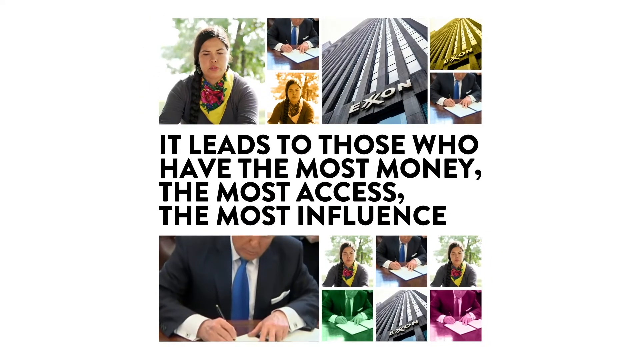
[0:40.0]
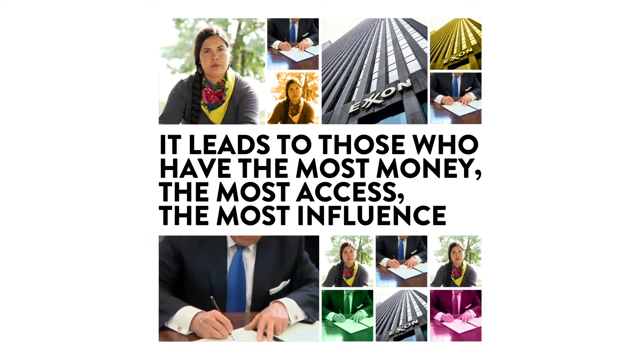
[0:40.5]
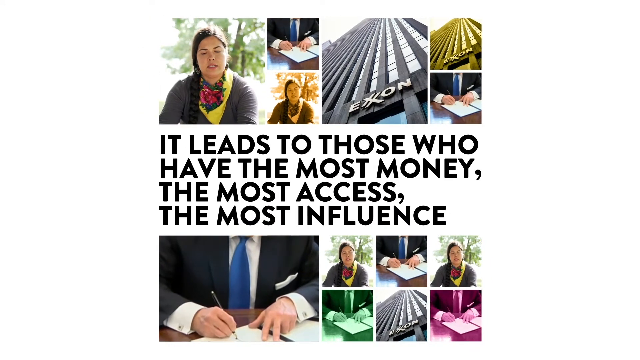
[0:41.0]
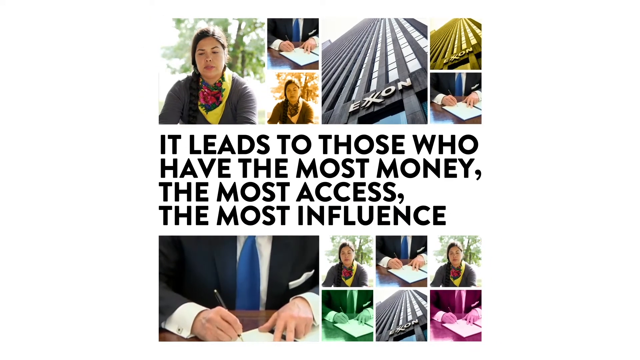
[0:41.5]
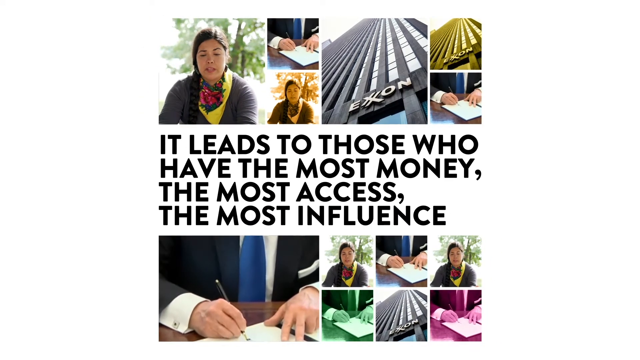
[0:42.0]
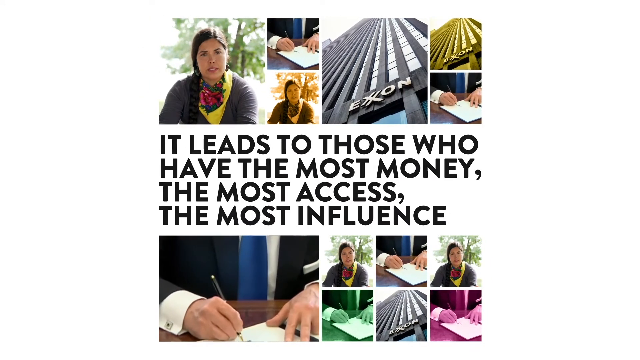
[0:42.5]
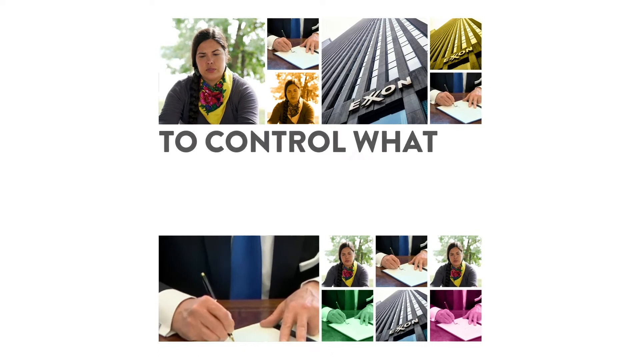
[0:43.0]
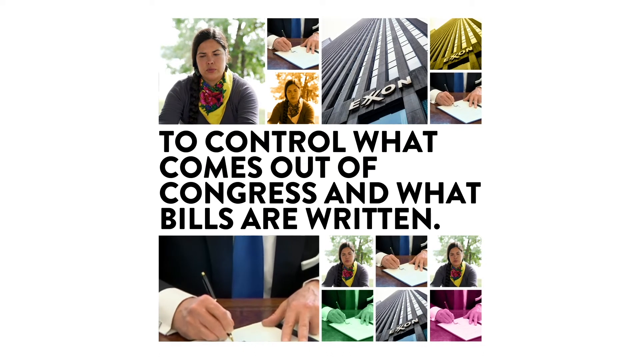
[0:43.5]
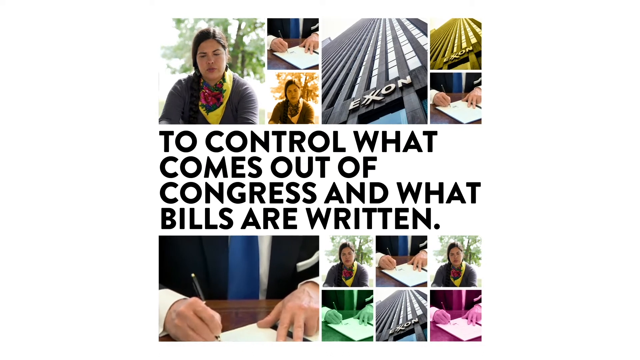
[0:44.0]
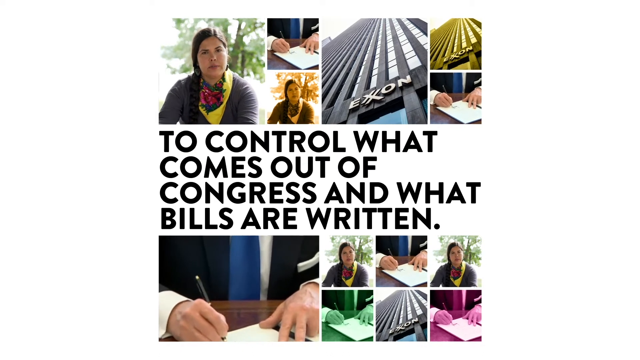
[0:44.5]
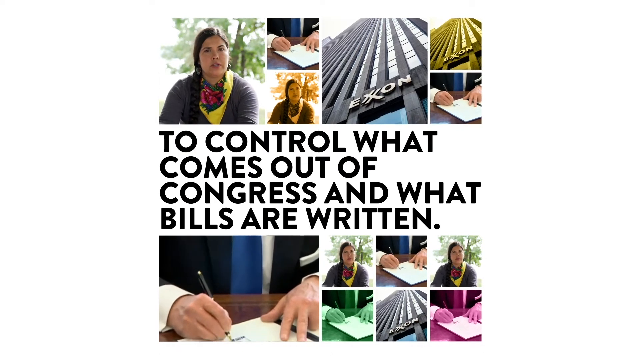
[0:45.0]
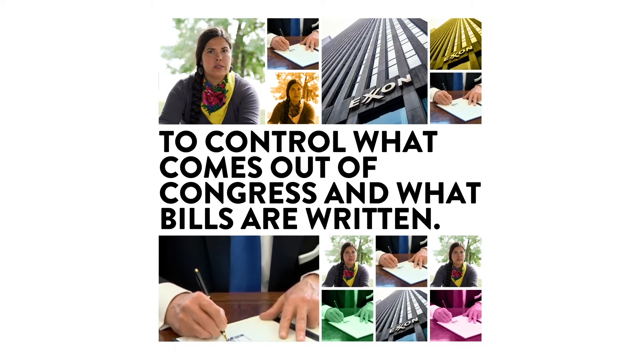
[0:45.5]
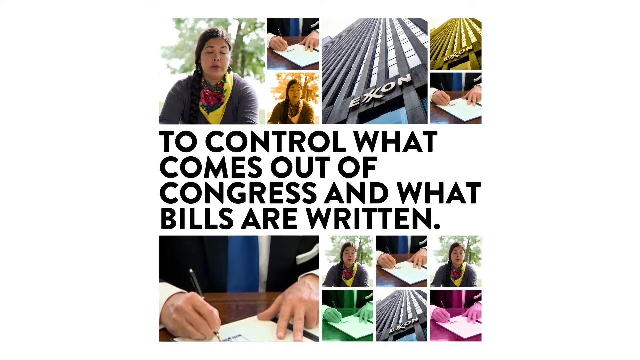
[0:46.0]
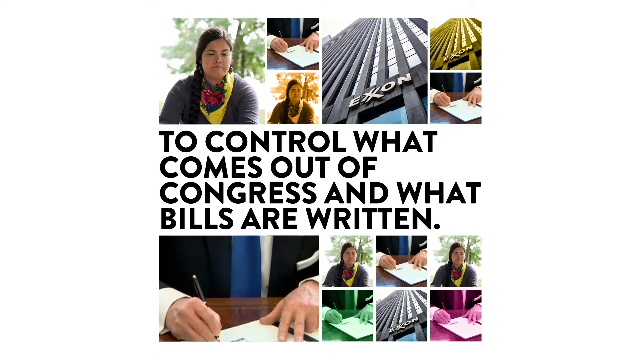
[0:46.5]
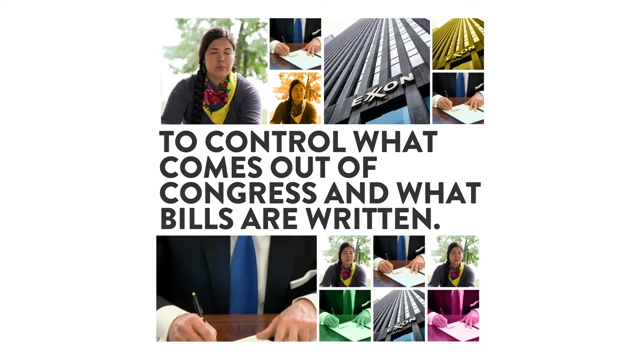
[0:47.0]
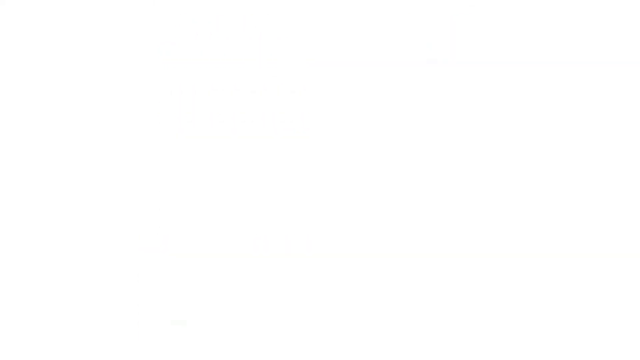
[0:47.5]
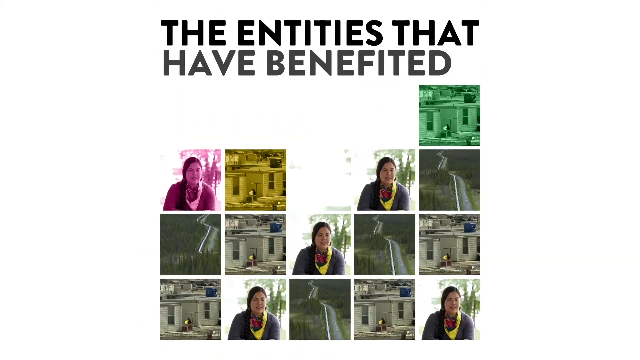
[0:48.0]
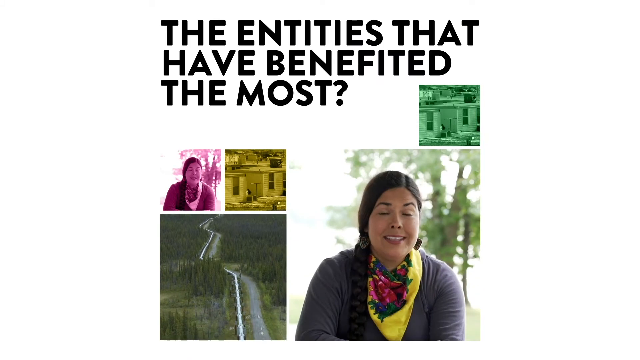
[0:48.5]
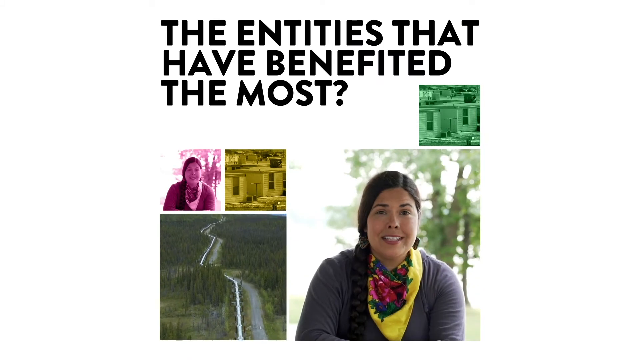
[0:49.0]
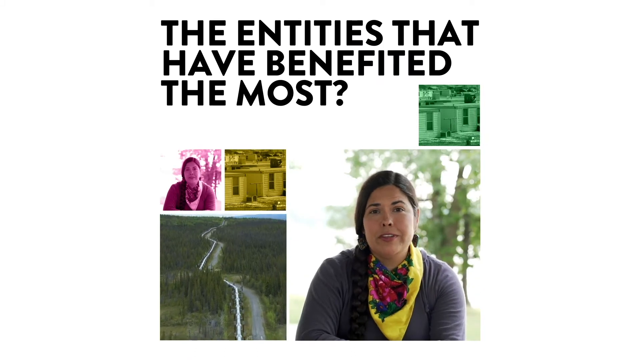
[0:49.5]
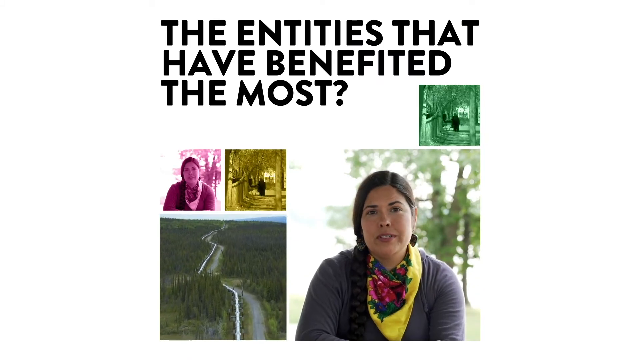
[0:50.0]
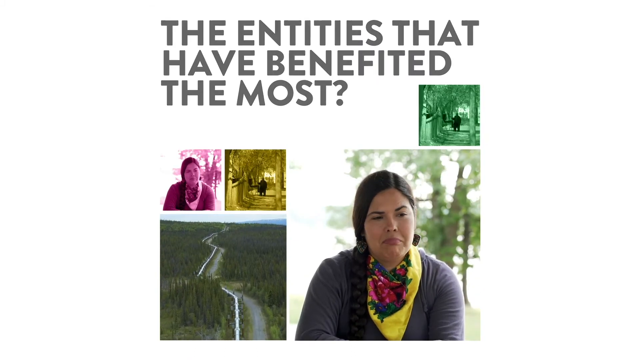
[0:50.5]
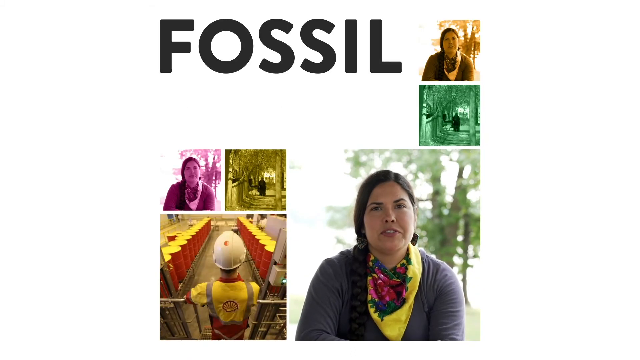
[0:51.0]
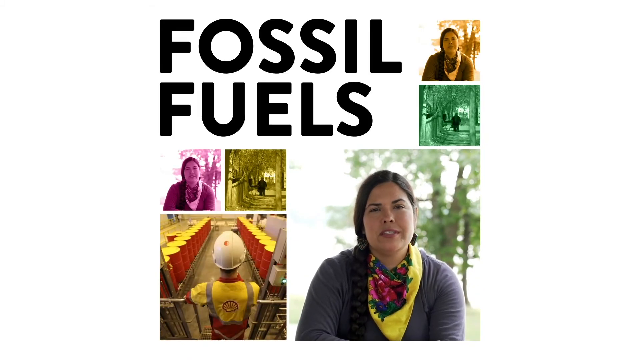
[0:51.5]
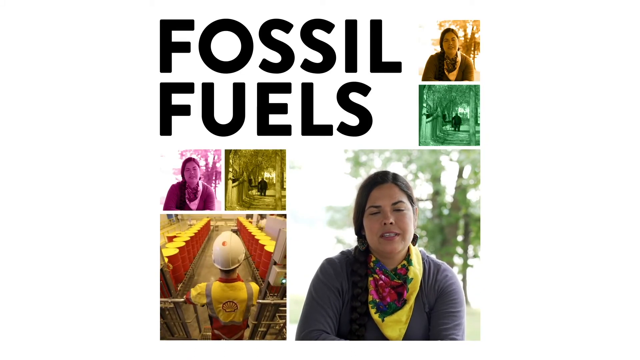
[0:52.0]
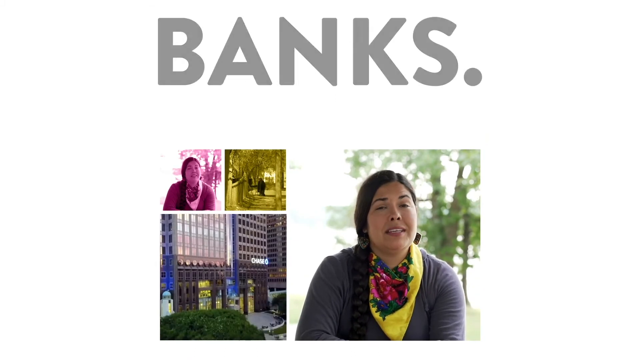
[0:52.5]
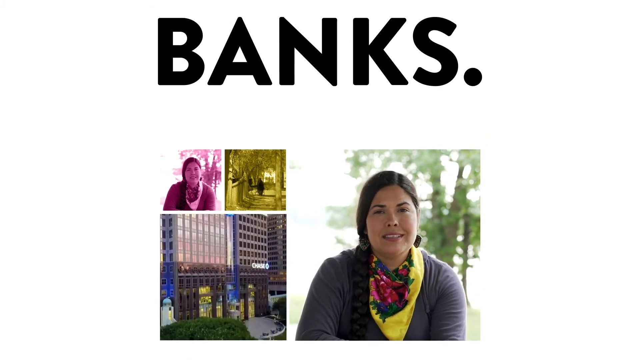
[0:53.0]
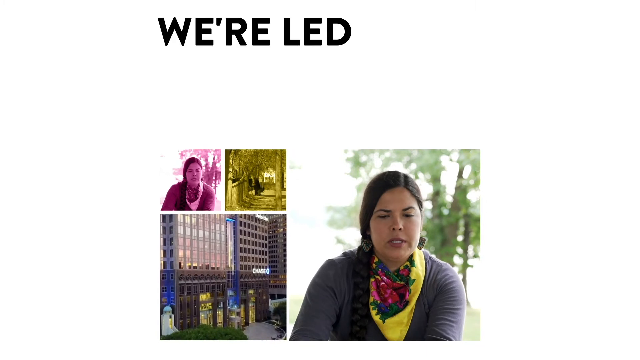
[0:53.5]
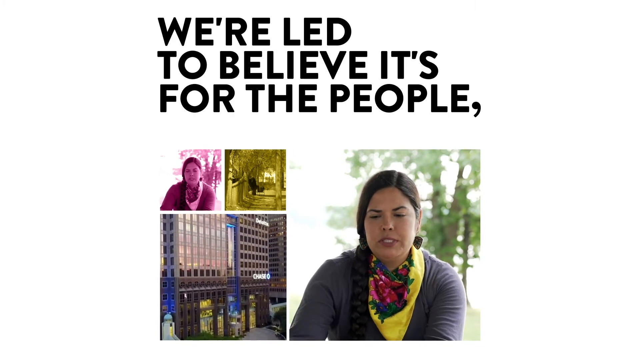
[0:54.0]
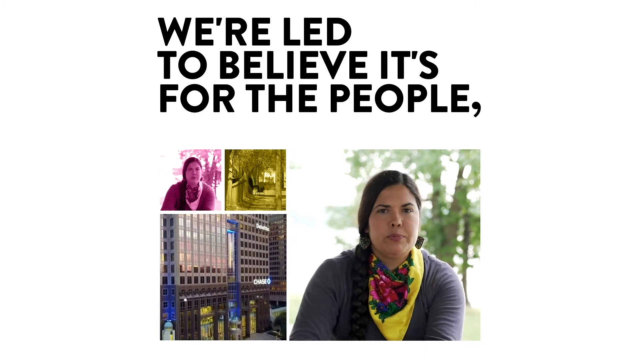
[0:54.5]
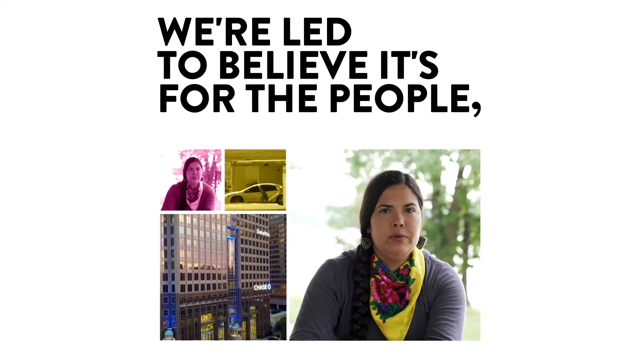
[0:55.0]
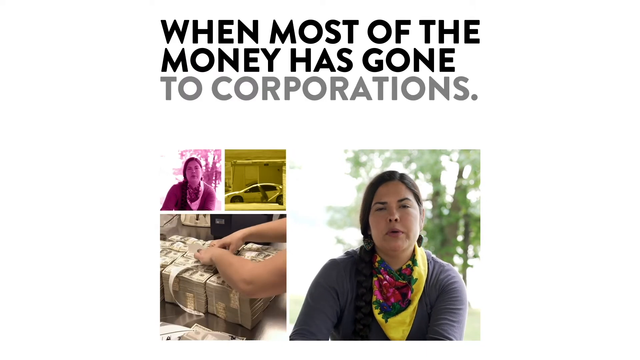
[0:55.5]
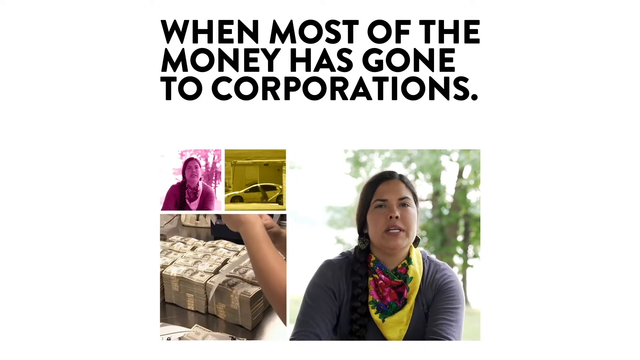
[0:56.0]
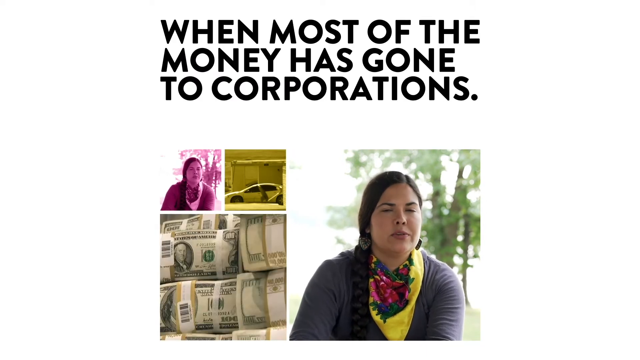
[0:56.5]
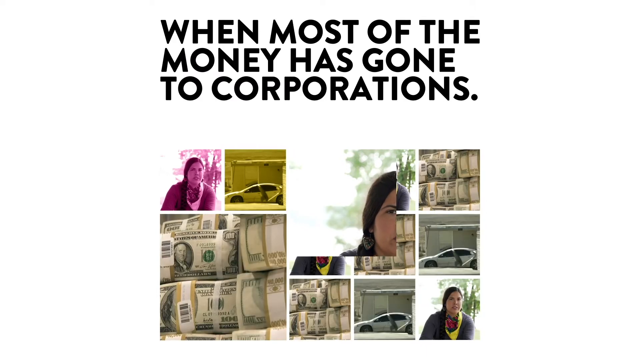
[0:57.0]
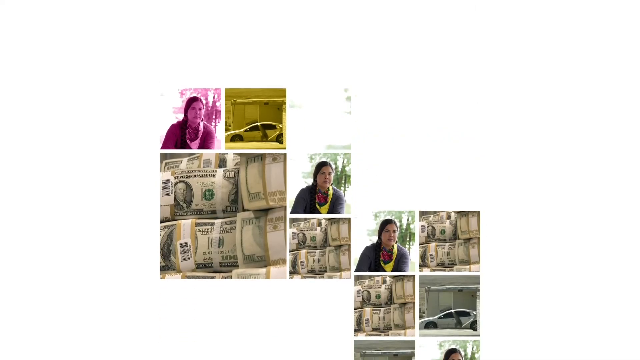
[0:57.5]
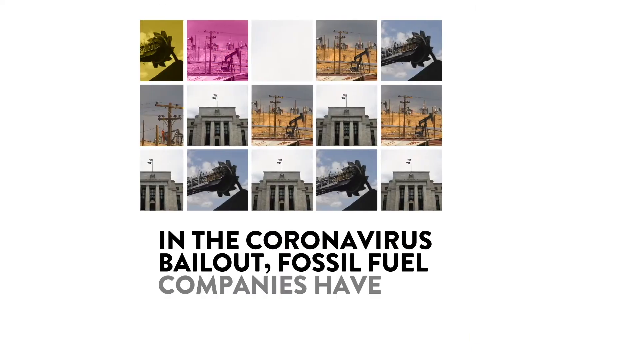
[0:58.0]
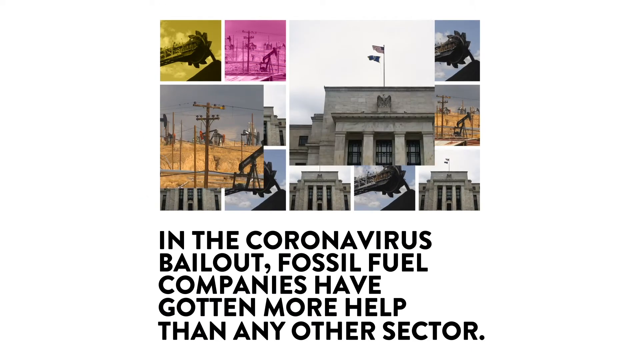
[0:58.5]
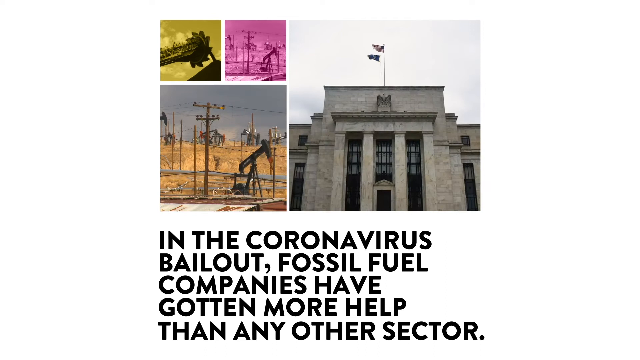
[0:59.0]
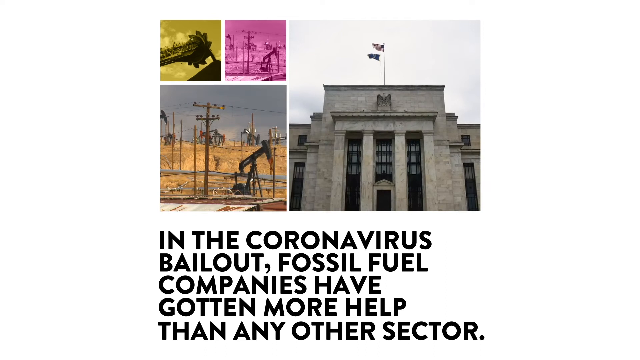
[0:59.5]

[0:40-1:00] The video continues with points about those with the most money, influence and access getting things through Congress, bills being written for them, fossil fuels, banks, and money going into corporations. The coronavirus is tied in, with a point that fossil fuel companies got more help in the coronavirus bailout. Big businesses and money going into things are shown, along with oil being drilled and a worker in a hard hat watching out over the field.